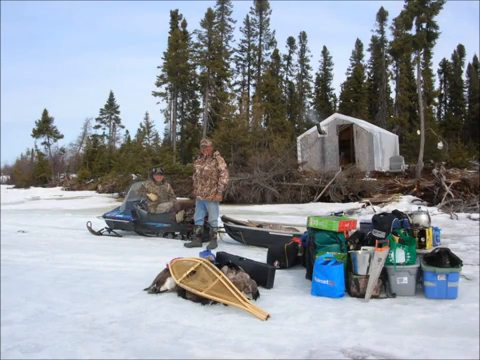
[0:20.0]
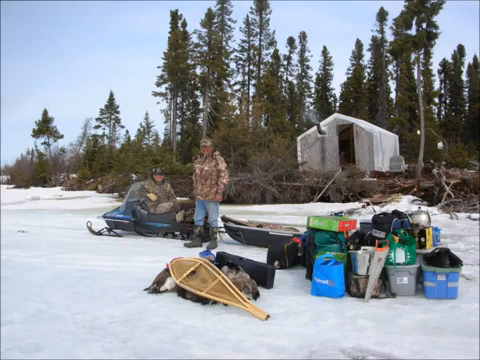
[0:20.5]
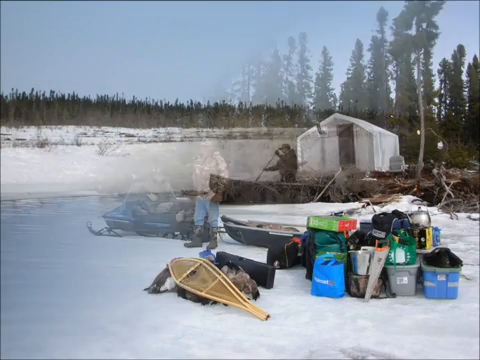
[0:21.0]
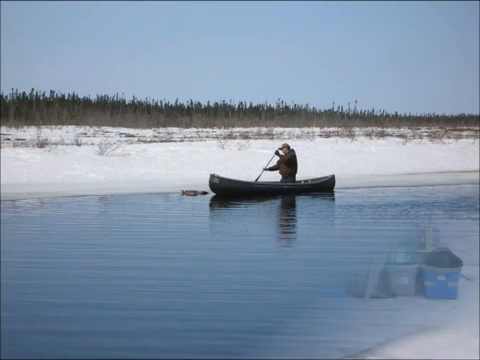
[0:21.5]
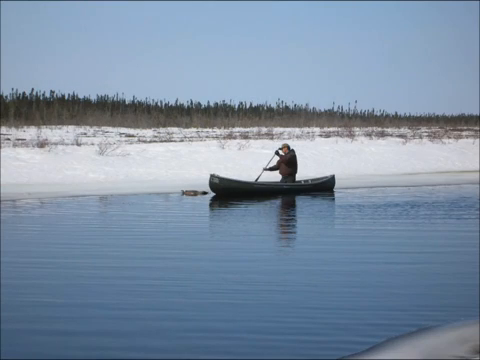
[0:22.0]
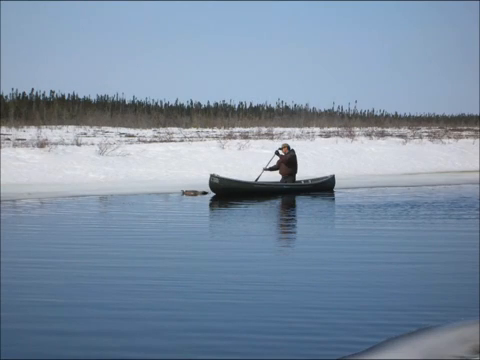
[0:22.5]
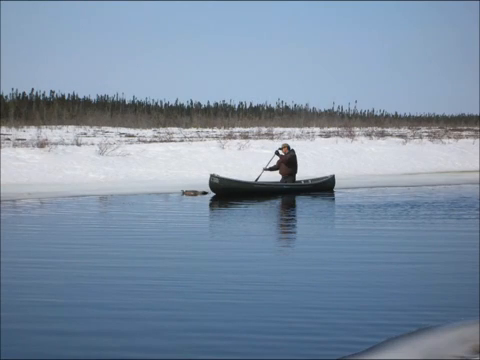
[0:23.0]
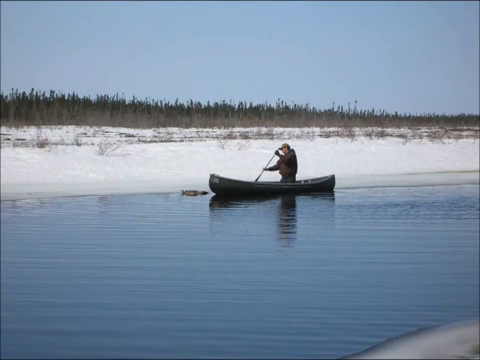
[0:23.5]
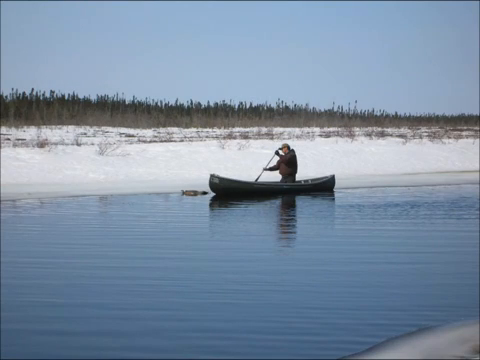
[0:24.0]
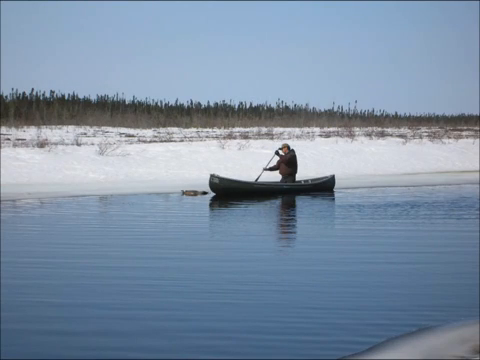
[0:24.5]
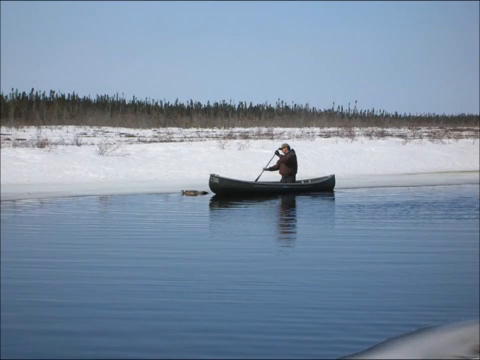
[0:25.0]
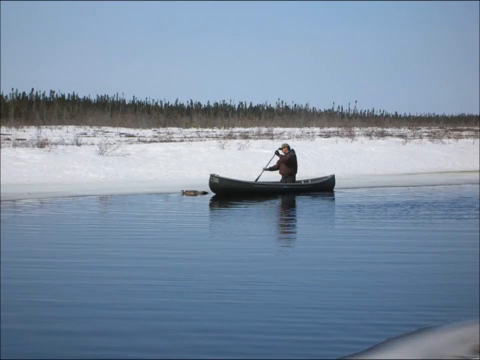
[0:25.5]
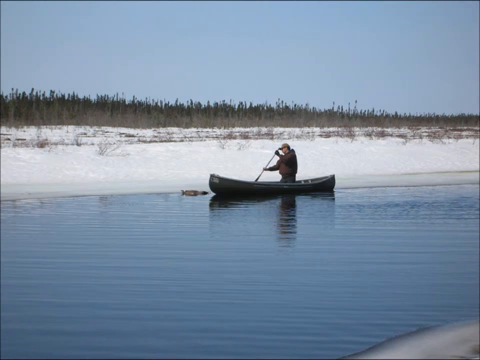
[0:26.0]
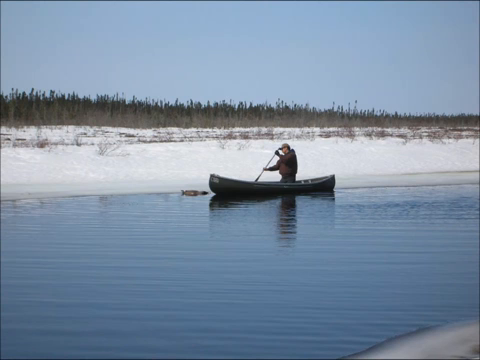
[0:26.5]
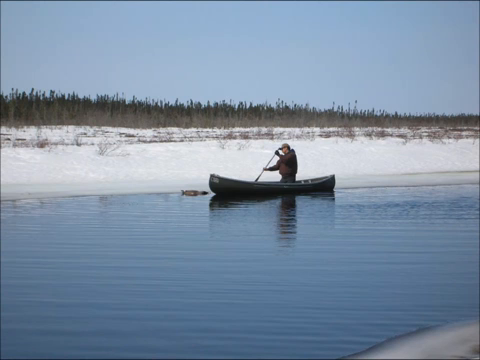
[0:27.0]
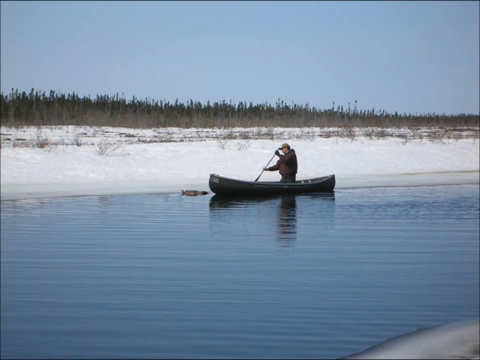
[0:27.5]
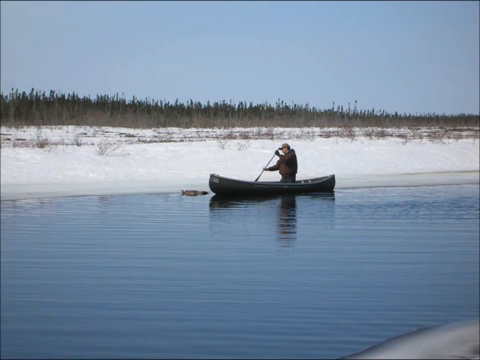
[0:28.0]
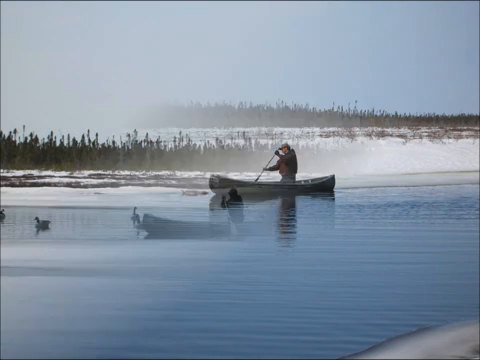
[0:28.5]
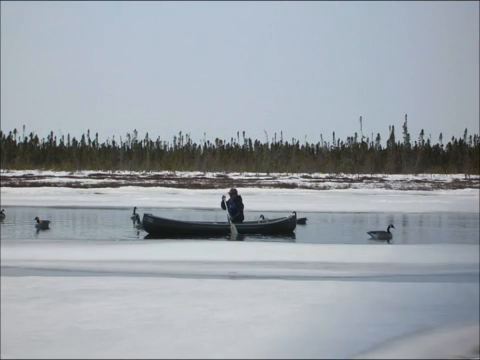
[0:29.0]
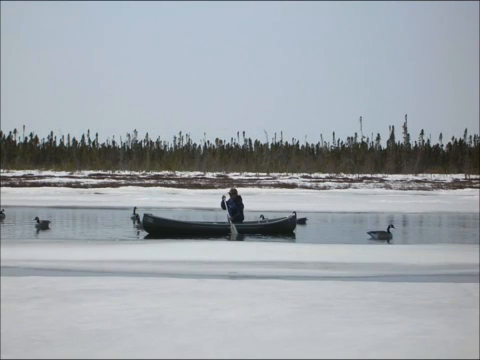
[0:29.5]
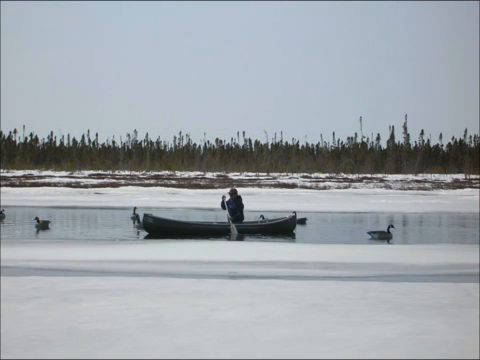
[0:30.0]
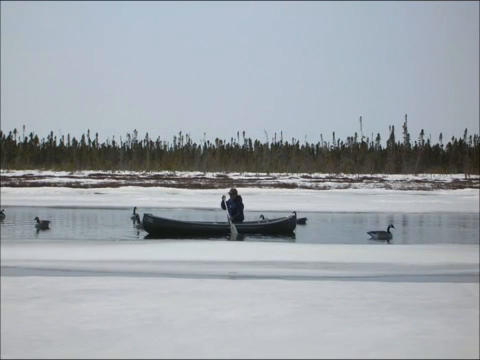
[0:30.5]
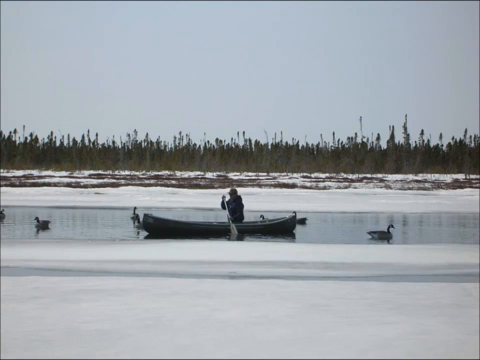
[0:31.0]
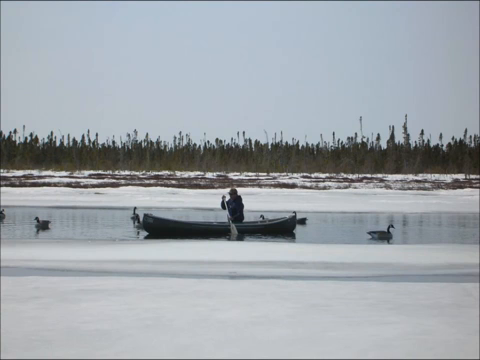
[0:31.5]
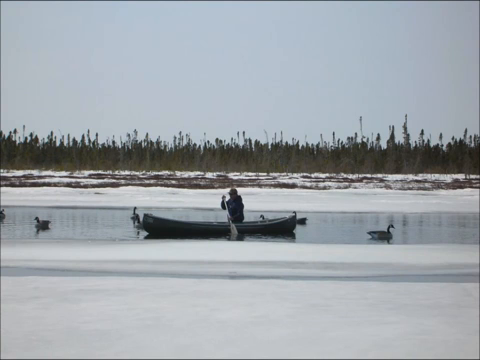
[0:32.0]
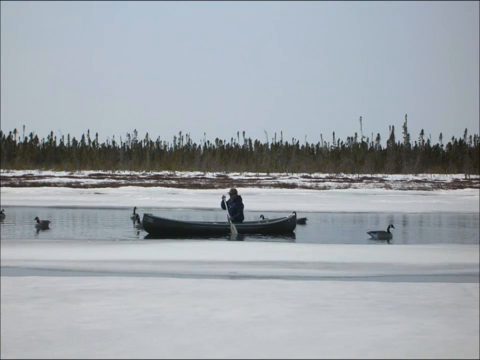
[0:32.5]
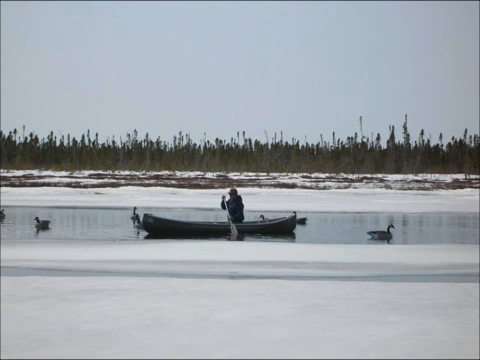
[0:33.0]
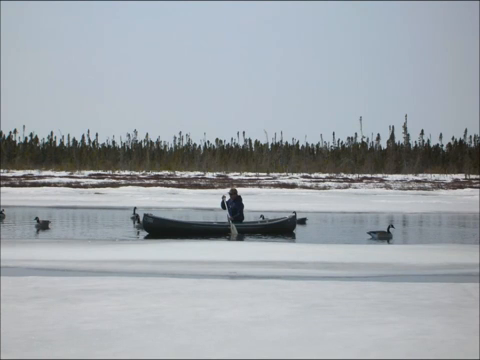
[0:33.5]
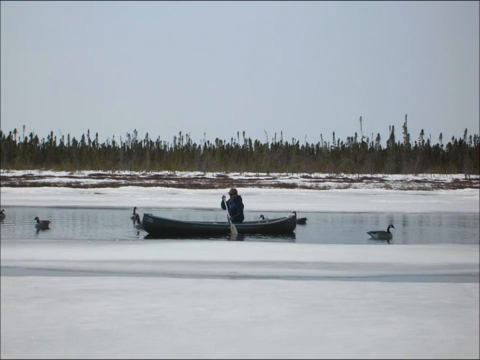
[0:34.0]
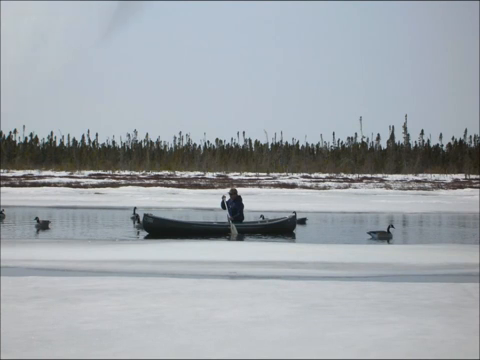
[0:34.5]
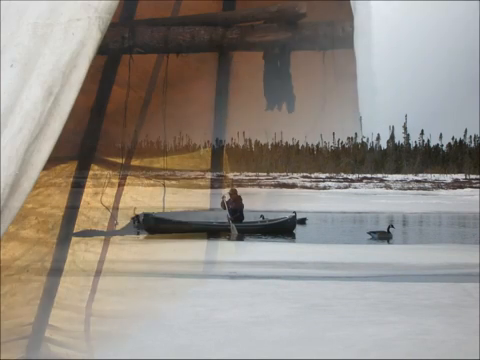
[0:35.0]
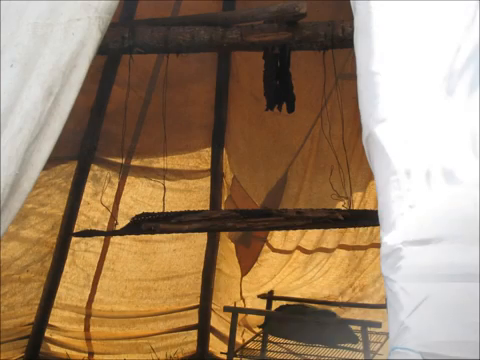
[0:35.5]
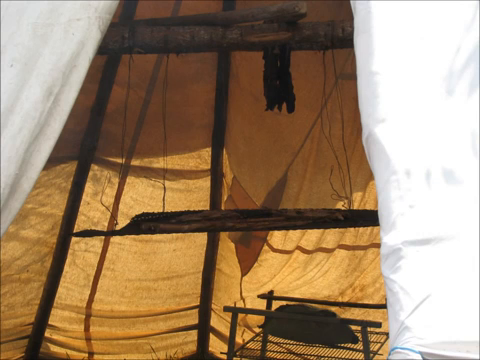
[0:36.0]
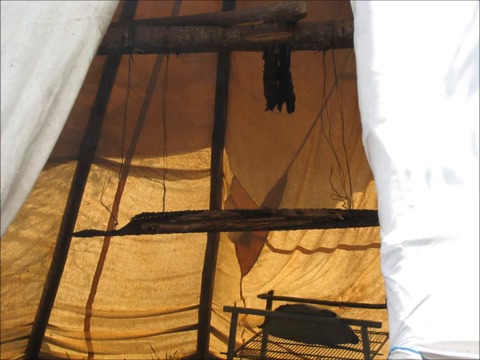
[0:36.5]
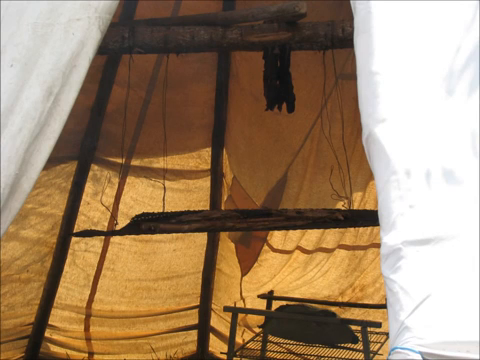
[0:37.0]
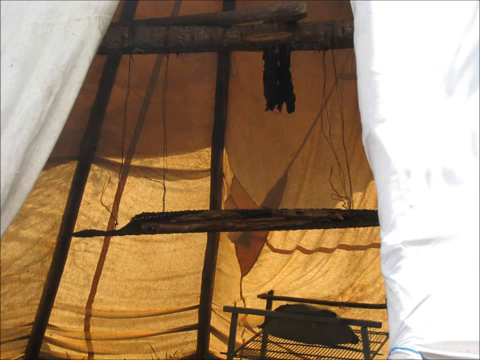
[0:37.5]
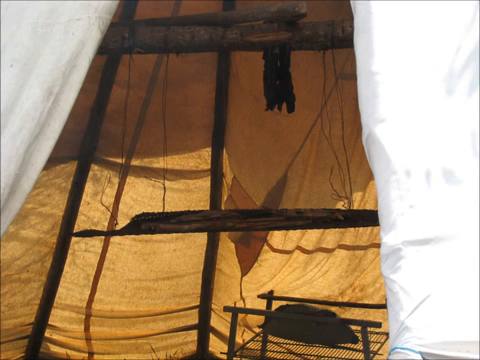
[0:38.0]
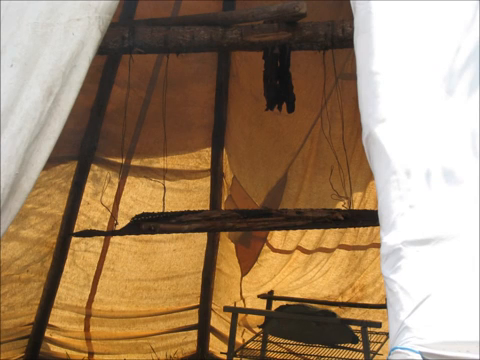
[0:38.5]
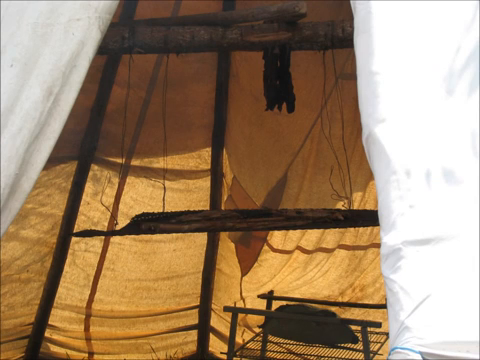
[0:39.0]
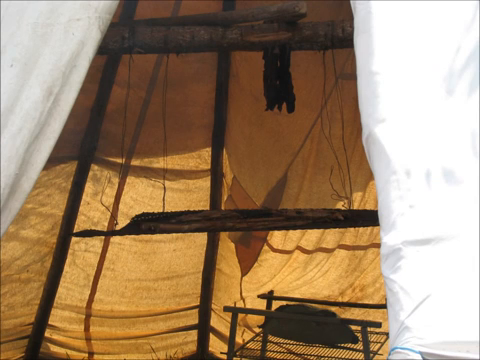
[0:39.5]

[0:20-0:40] The video transitions to another photograph showing a man kneeling in a canoe, holding a paddle out to the right side and paddling through the water. The photograph is taken from the opposite side of the water, looking across at him. He is very close to the edge of the water, which is a bank covered in snow; beyond it is a row of trees and a hazy blue sky above. The man wears a thick jacket and a baseball cap and looks like he probably has gloves on. The next photo shows probably the same man in the canoe, this time a little further into the middle of the water. Half of the lake he is on is frozen, and several geese are swimming in the water around him.